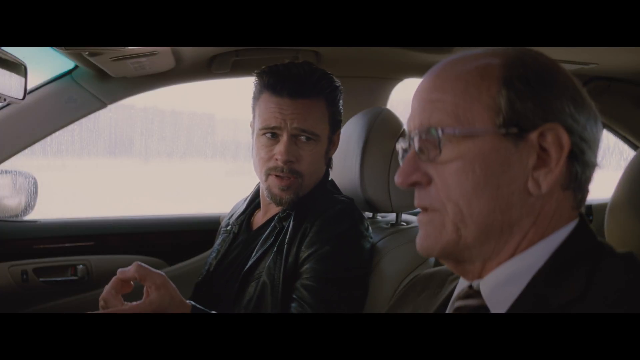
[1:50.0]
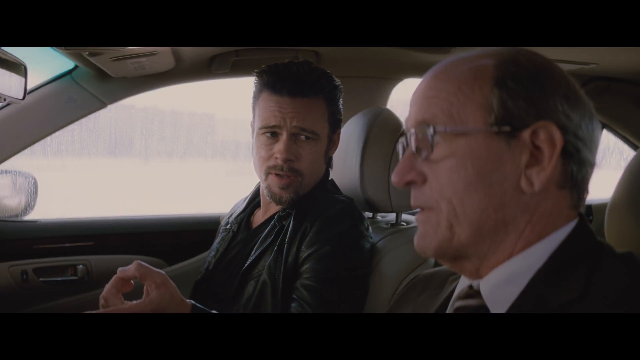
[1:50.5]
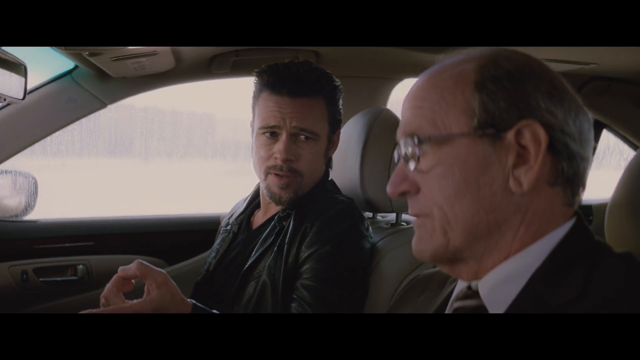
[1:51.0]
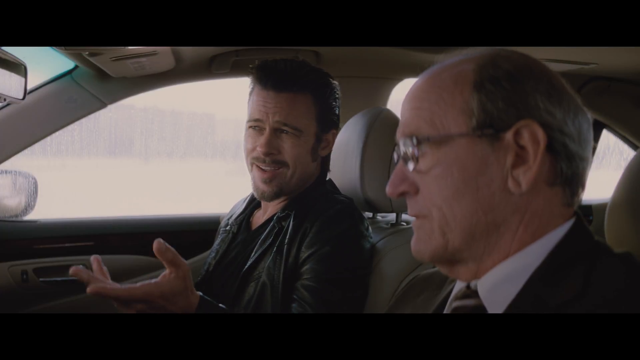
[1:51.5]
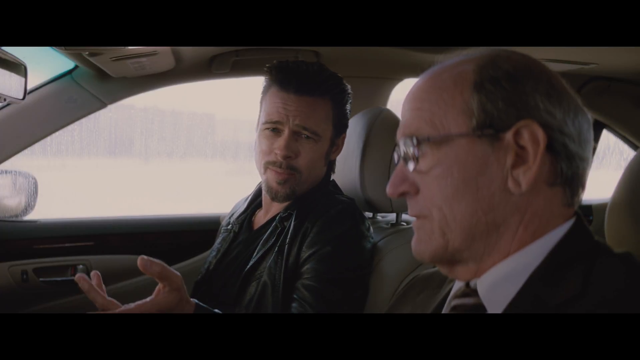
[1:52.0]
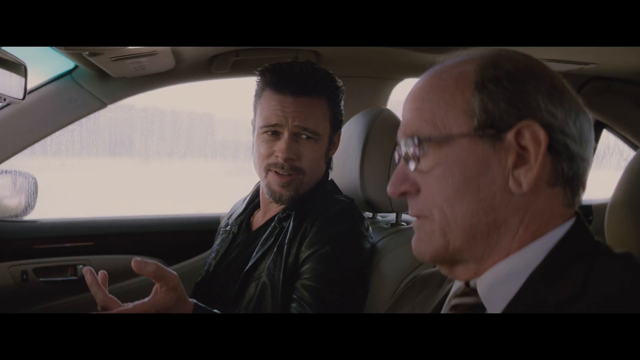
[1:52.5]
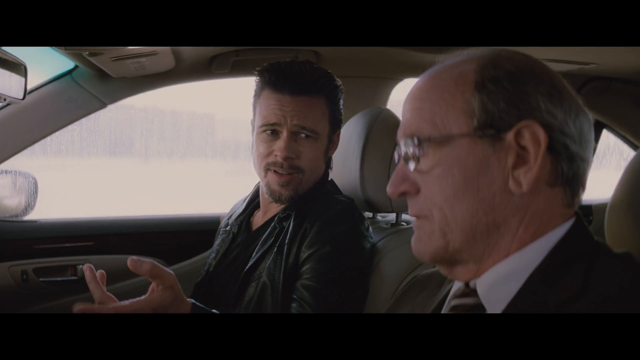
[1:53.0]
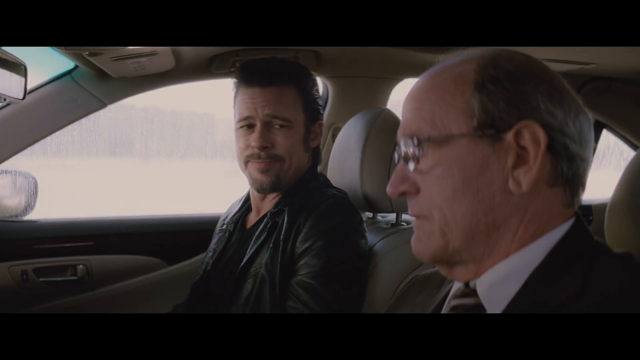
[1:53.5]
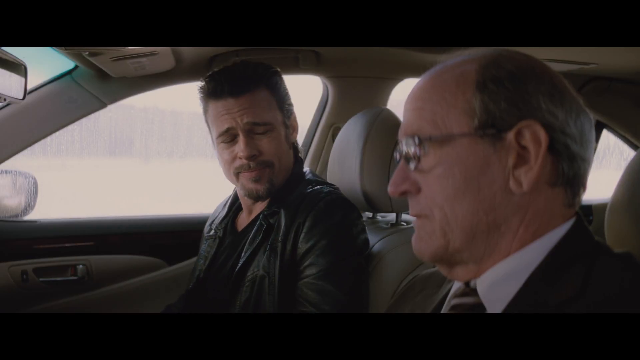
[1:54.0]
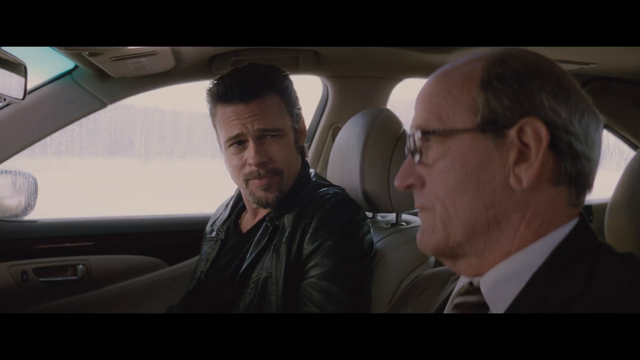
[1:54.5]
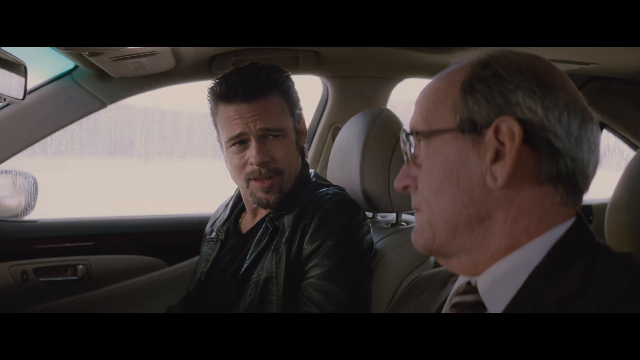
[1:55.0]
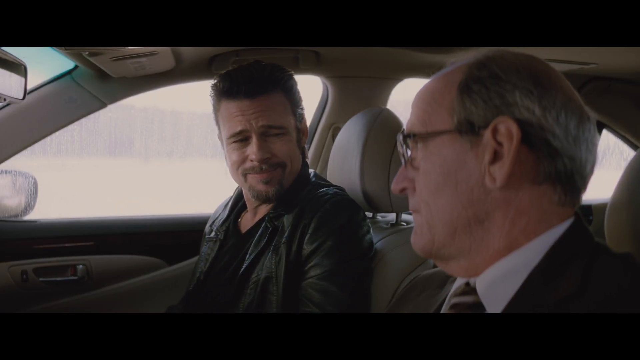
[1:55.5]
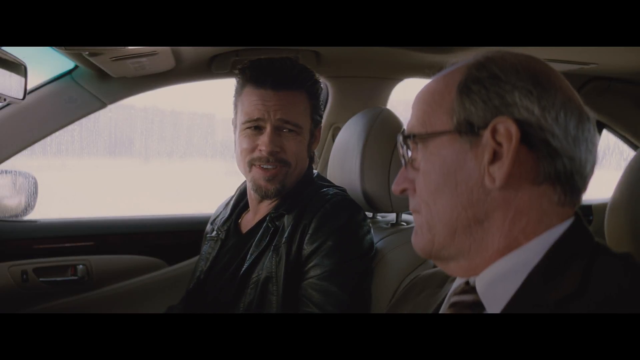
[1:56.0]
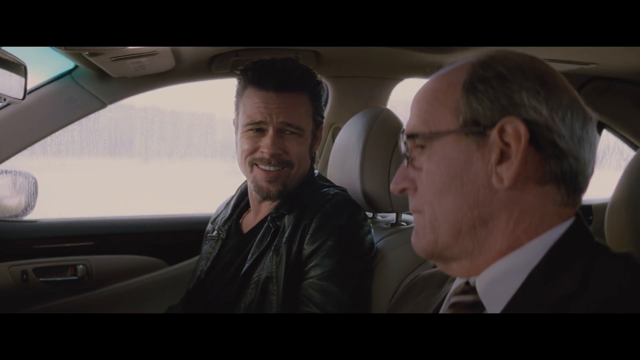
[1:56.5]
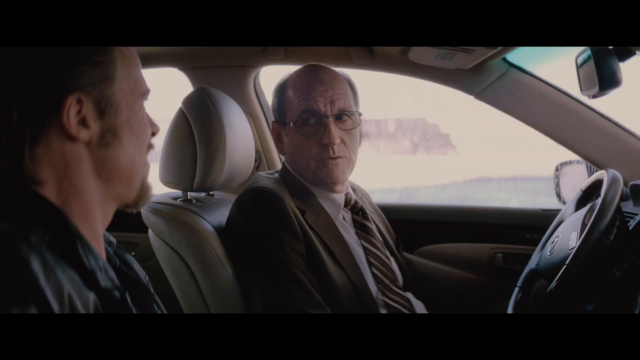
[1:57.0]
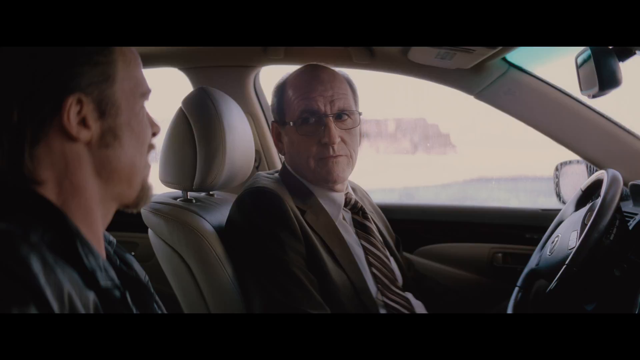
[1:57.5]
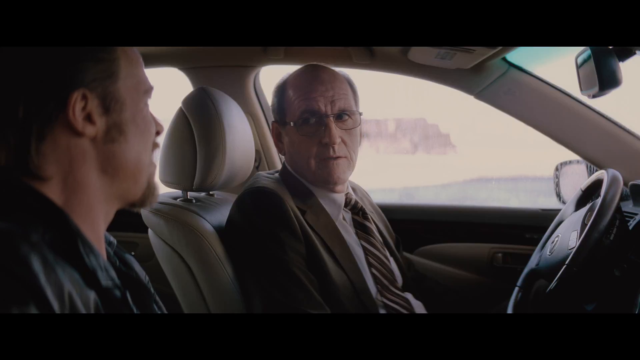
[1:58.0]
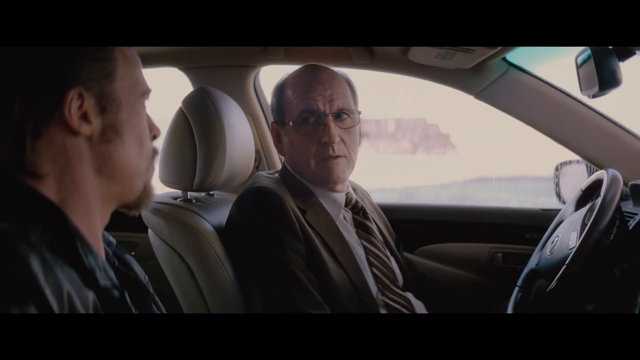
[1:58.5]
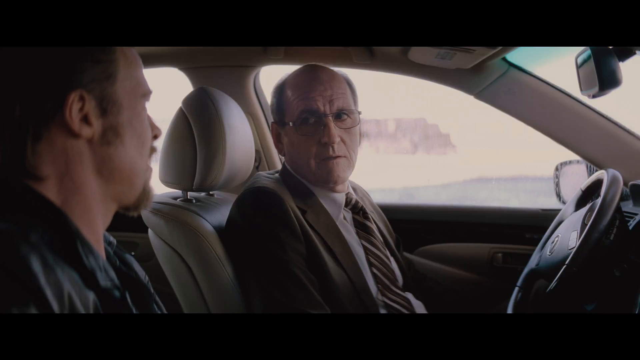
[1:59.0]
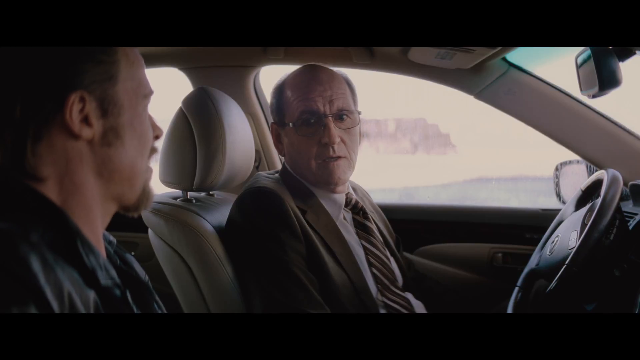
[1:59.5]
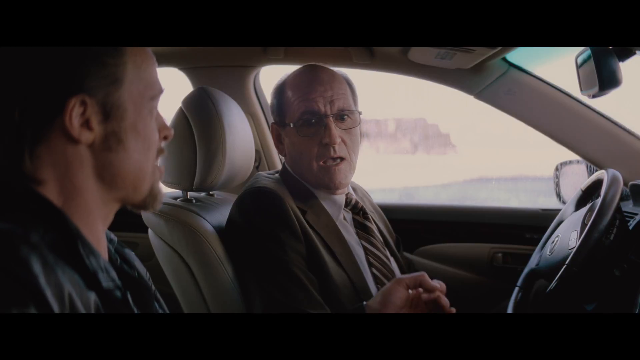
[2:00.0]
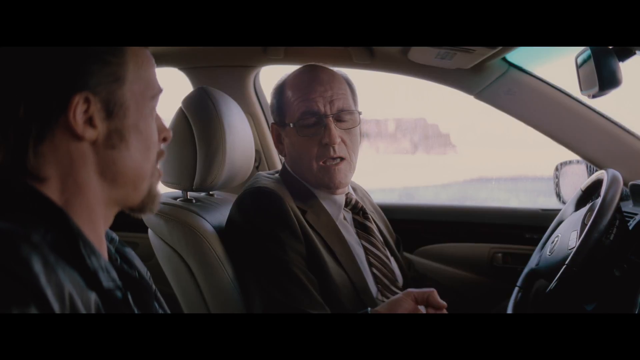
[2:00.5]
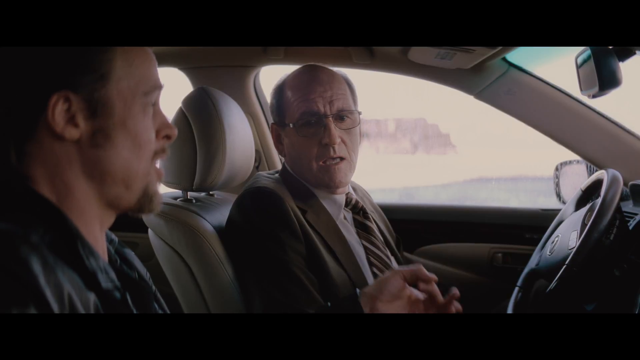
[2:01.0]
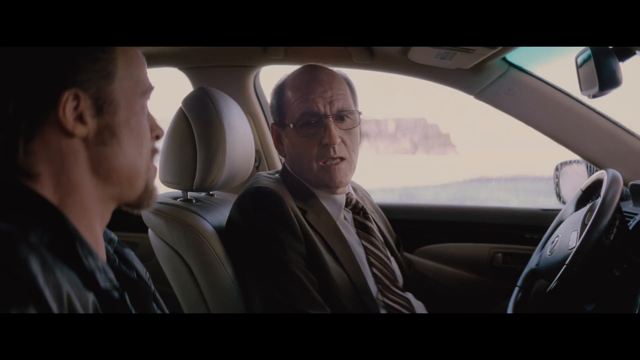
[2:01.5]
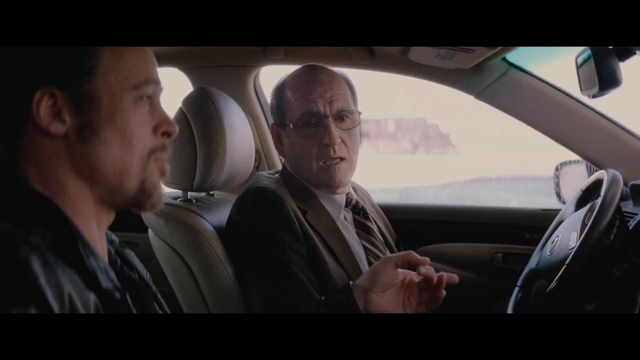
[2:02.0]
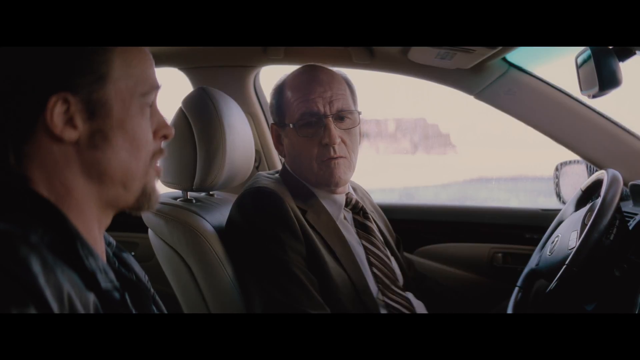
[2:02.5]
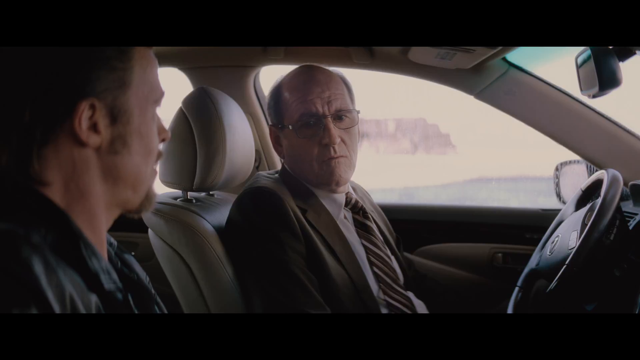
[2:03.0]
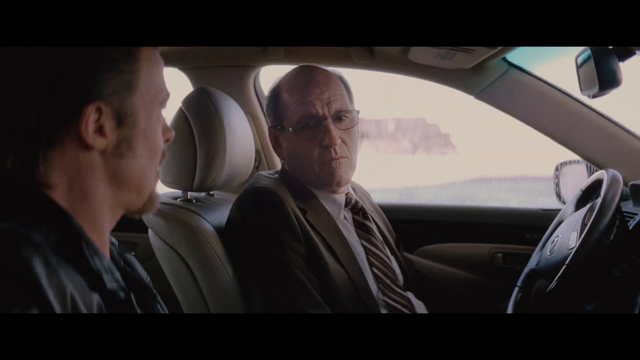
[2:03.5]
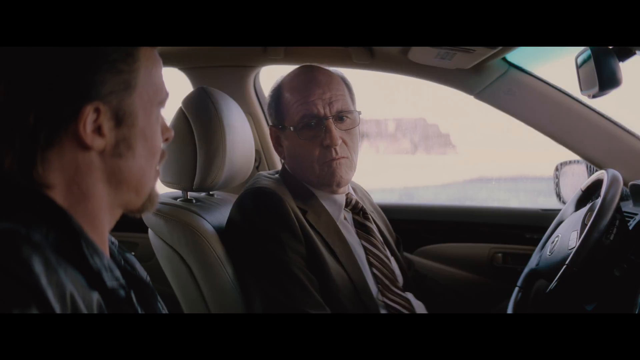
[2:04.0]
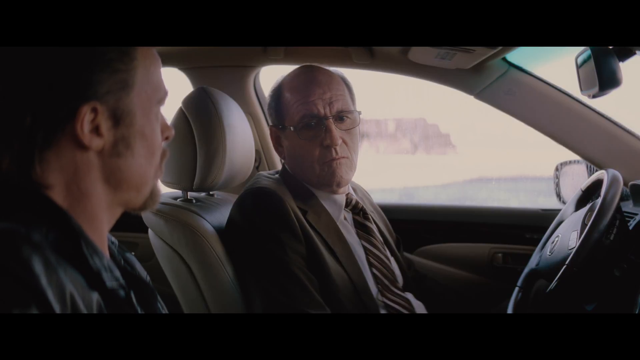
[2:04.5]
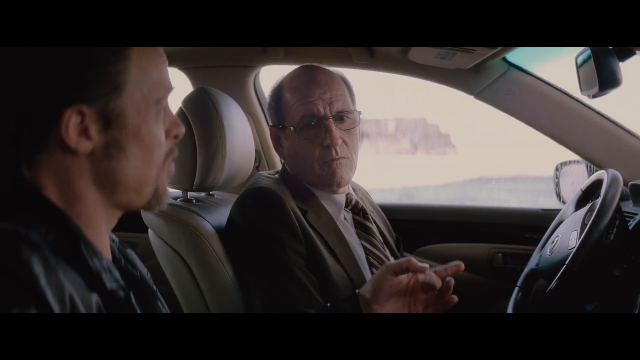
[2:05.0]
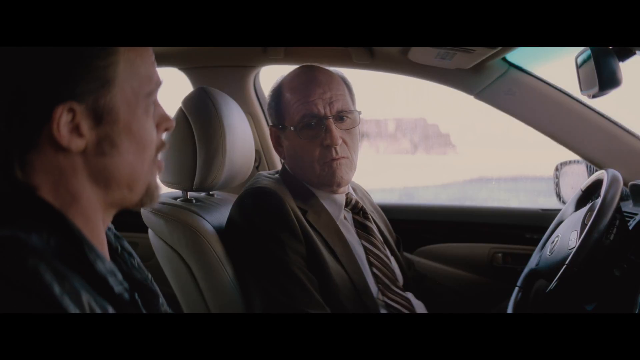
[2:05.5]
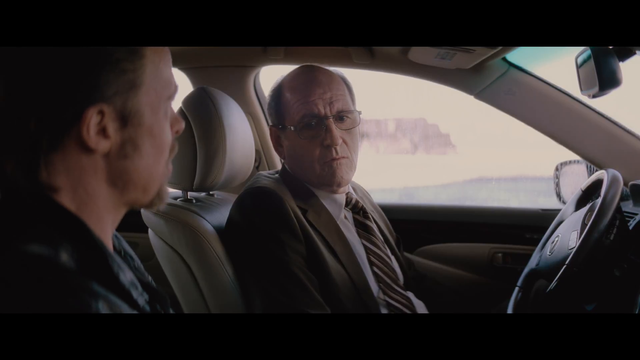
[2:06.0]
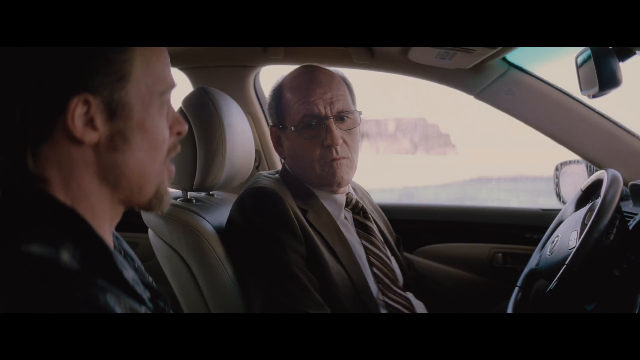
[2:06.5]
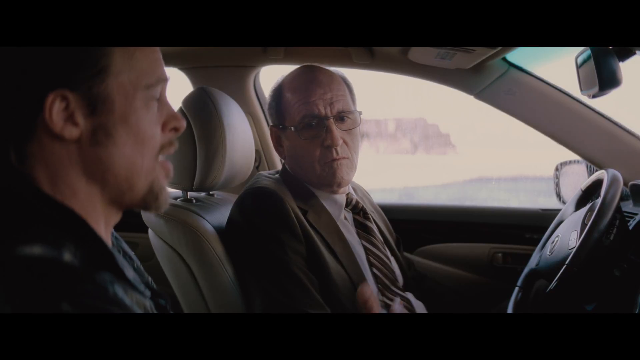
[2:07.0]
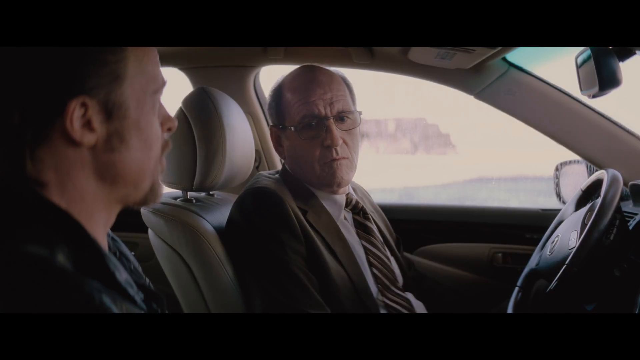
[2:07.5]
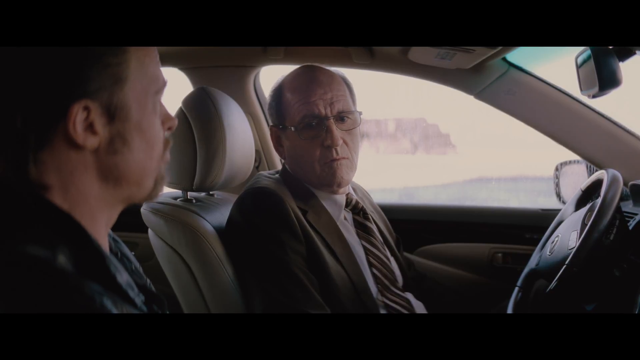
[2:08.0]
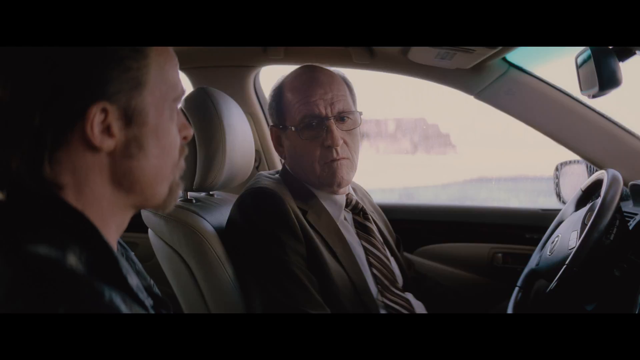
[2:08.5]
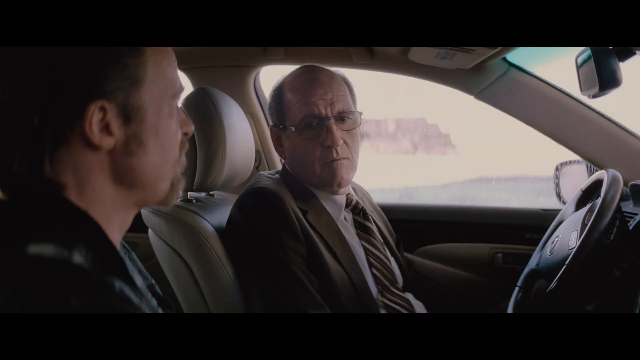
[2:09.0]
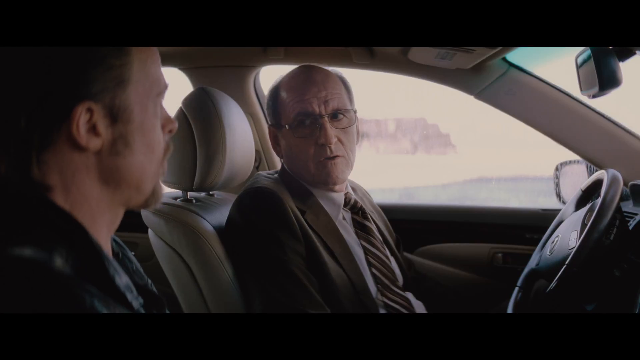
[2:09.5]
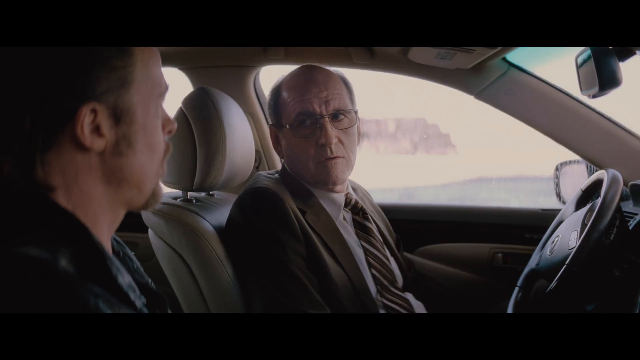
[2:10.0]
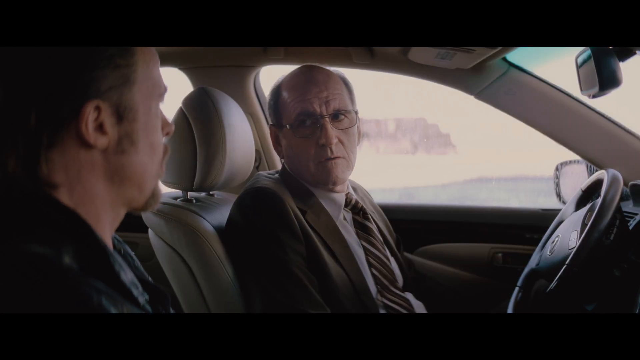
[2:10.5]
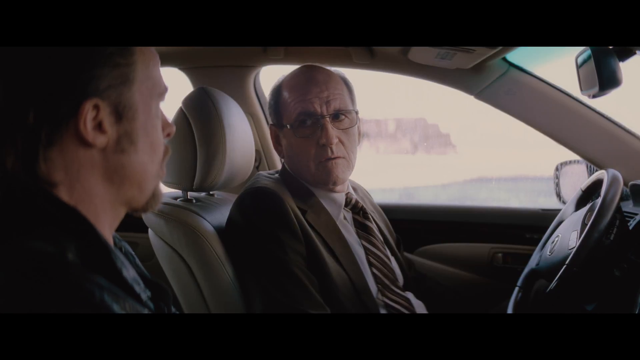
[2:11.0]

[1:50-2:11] Two men are in a car. On the left, Brad Pitt wears a biker jacket and holds his left hand up, somewhat open, gesturing toward the other man as if trying to make a point. On the right is an older man with glasses, a black suit, and a slightly balding head, who is looking forward rather than at Brad Pitt, then looks over at him. Brad Pitt gives something like a smile that is a bit of a grimace, then a smile showing his teeth while still seeming to grimace a bit. The shot transitions to the older man, who looks over at Brad Pitt, not looking too sure about something, and nods his head a little. Brad Pitt continues to gesture with his left hand while the older man seems to be considering something. The car's interior is beige-like, a rear view mirror is in the upper right corner of the frame when the shot is on the older man, and a black steering wheel at the far right corner of the frame shows the older man is in the driver's seat. Outside is a very white environment; it is hard to tell whether the area is just too bright and blown out or covered in snow.